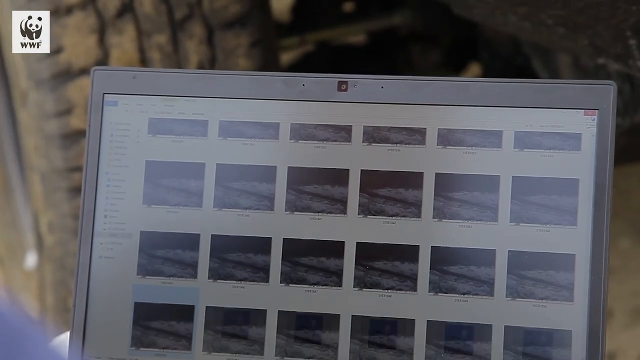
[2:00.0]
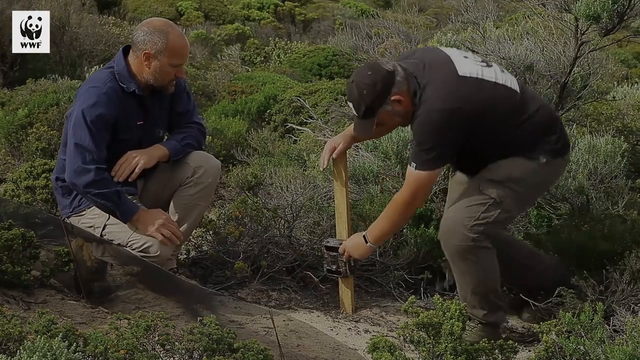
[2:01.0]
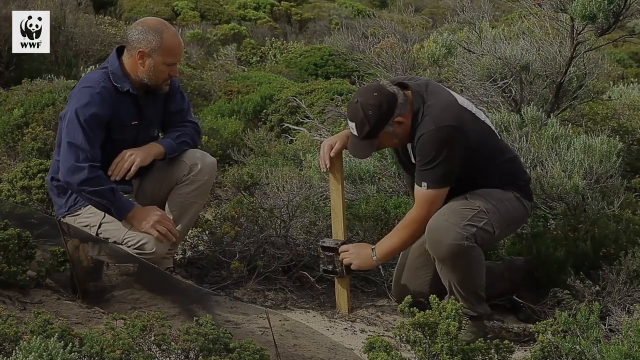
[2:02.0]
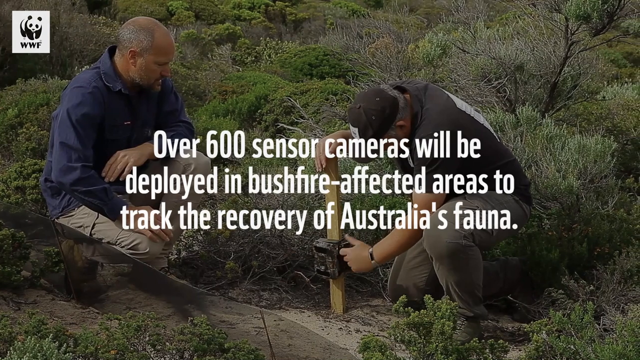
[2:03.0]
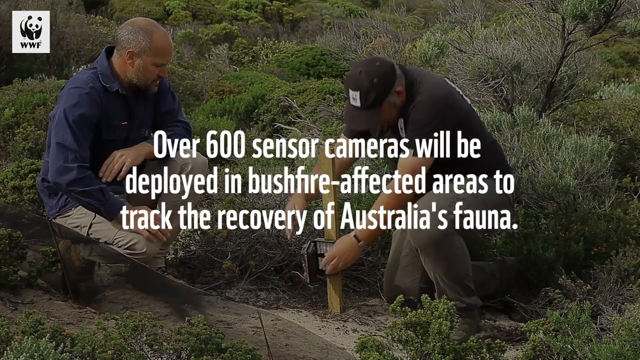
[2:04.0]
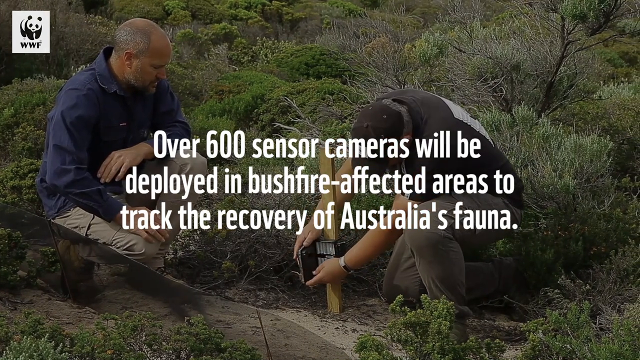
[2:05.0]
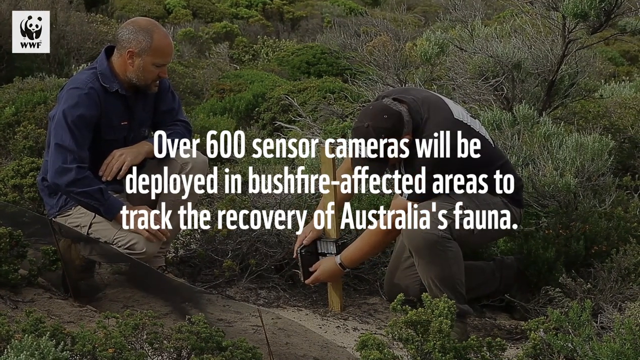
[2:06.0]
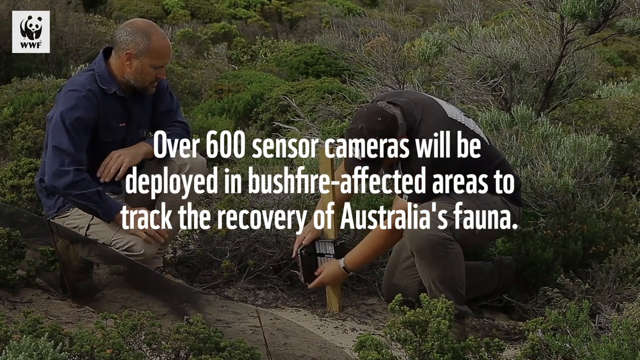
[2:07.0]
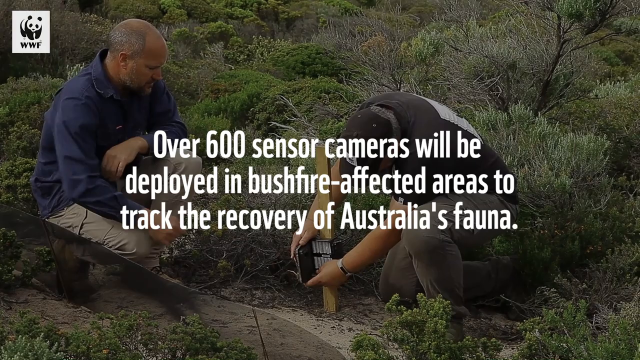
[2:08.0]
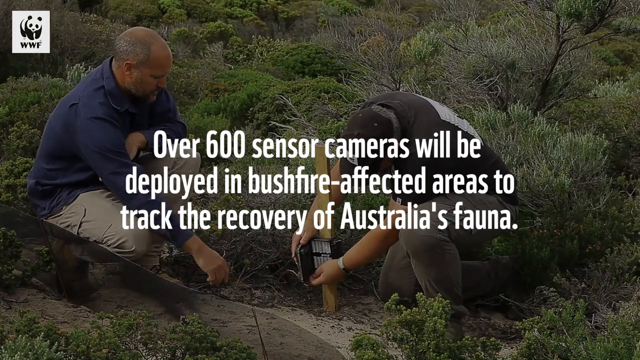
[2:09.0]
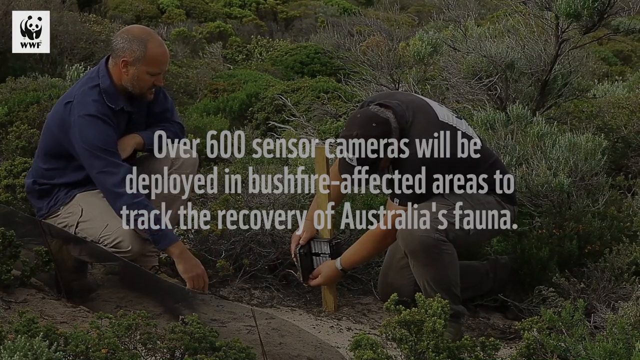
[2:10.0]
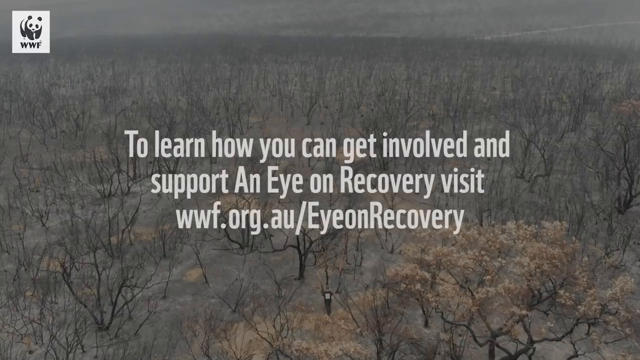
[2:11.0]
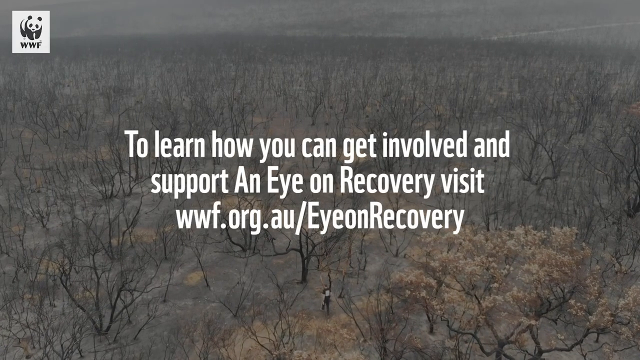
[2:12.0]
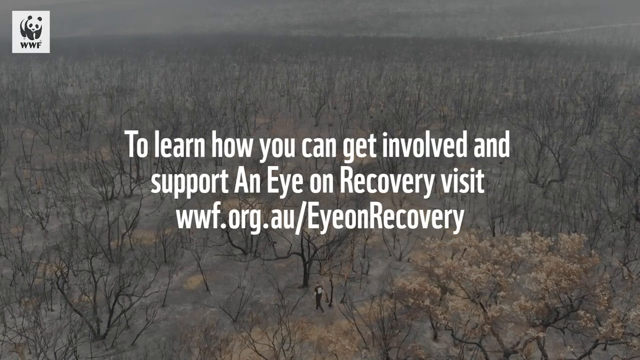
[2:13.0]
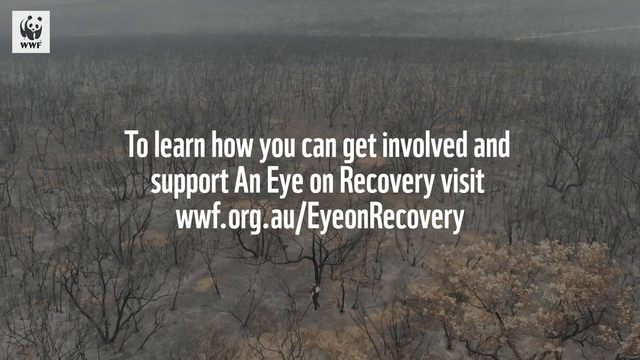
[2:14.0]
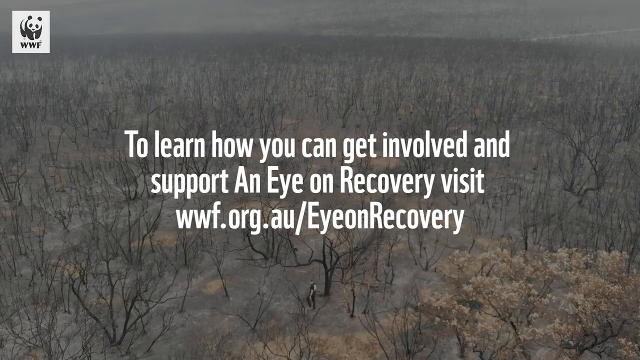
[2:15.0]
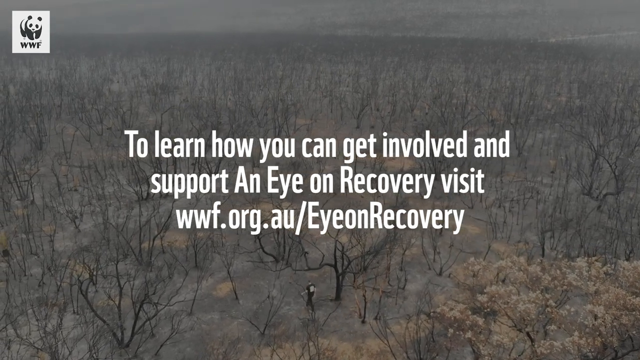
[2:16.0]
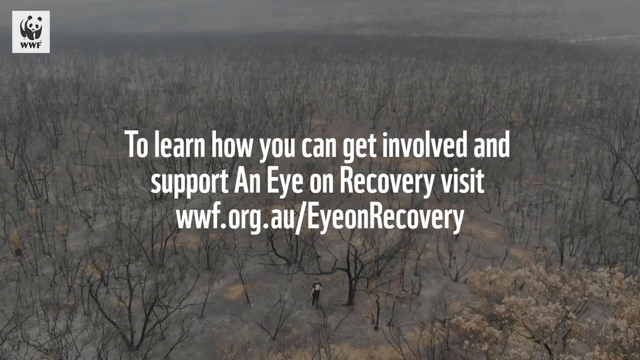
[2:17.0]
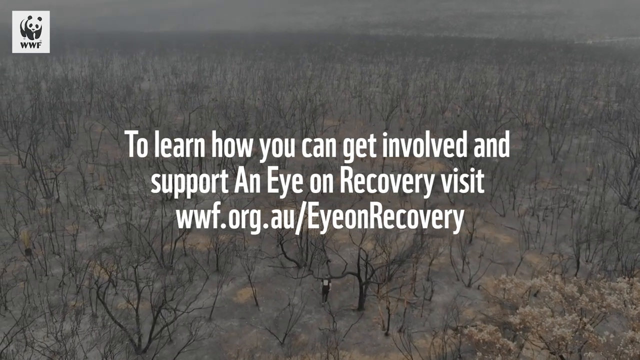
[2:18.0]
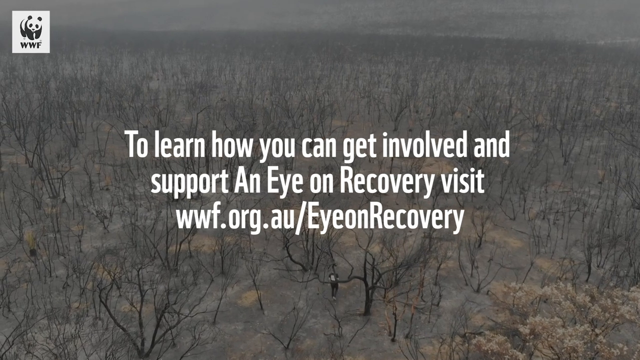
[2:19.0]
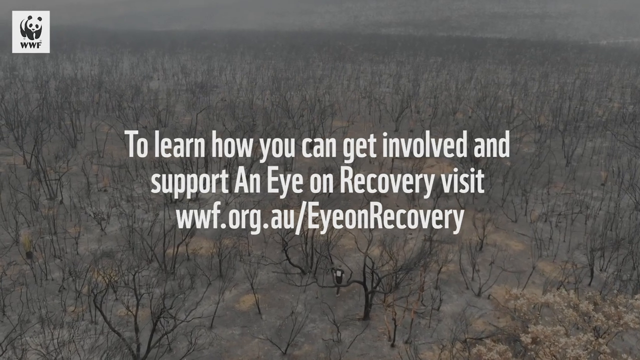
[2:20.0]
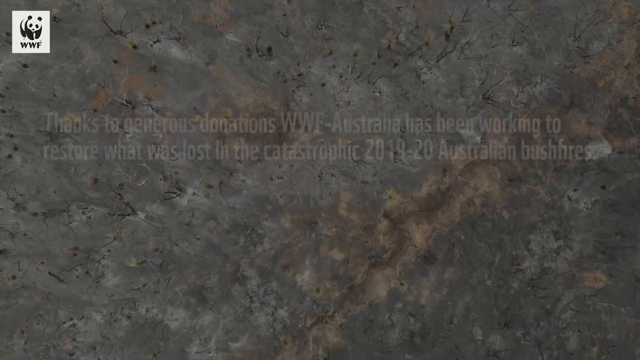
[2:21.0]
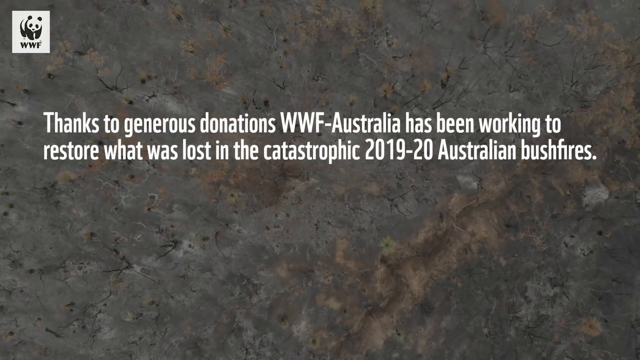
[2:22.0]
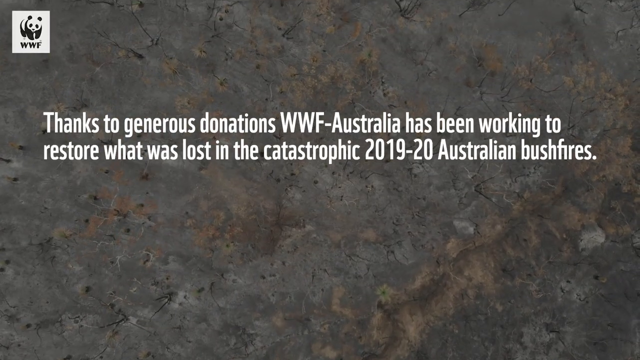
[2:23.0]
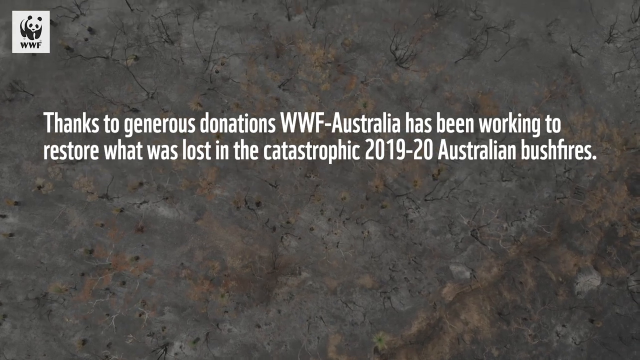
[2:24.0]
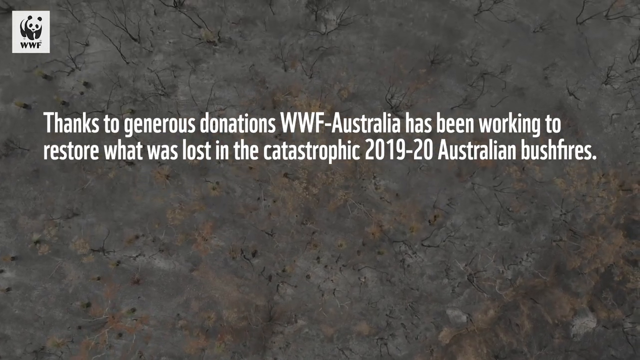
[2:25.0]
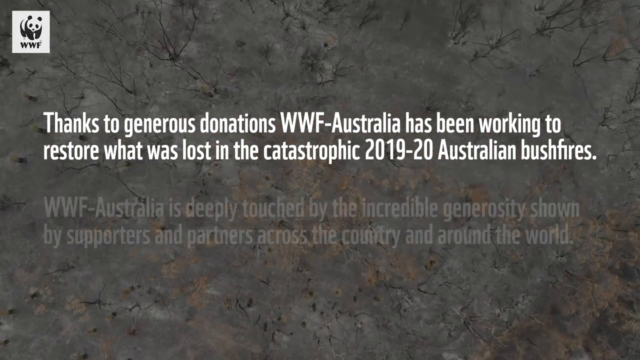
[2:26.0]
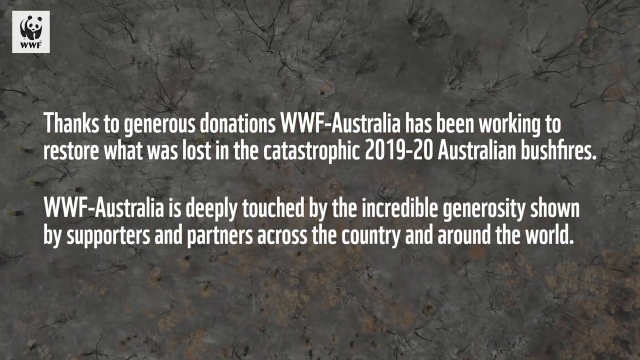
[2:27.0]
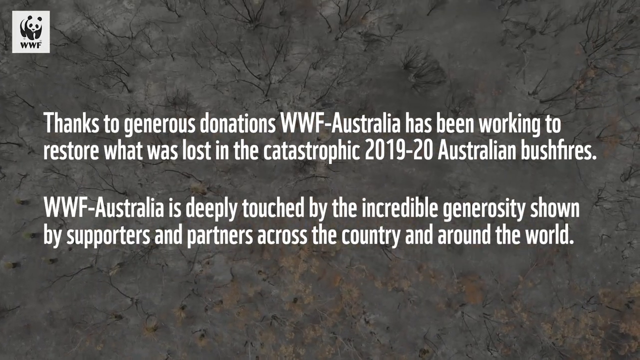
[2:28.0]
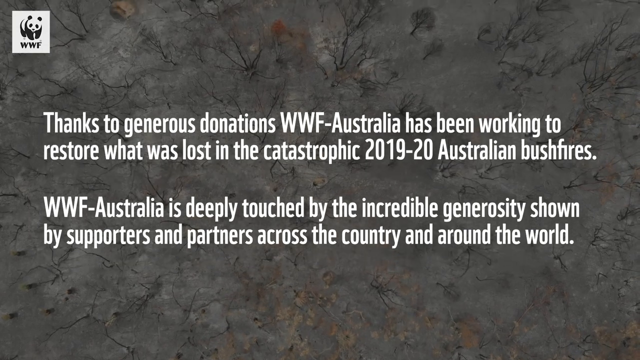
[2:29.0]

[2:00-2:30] The two men are back in the field. The one on the right kneels down and opens the door on the device. Text in the center reads "over 600 sensor cameras will be deployed in bushfire affected areas to track the recovery of Australia's fauna." In the background, the man carefully handles the door, while the man on the left in the blue shirt reaches forward briefly and then lets his hand hang down, balanced on his knee. The camera cuts to the overhead view of the wilderness again, with text in the center reading "to learn how you can get involved and support an eye on recovery", followed by "visit" and a website shown below. The camera pans to the left over the landscape, and at the bottom of the screen a person in a black shirt is visible walking, very distant, to the left of a tall, bare tree and continuing to walk away from the camera. A cut shows a more overhead view, apparently looking directly down on the area. Text in the center reads "thanks to generous donations, WWF Australia has been working to restore what was lost in the catastrophic 2019-20 Australian bushfires." More text appears at the bottom: "WWF Australia is deeply touched by the incredible generosity shown by supporters across the country, and around the world."